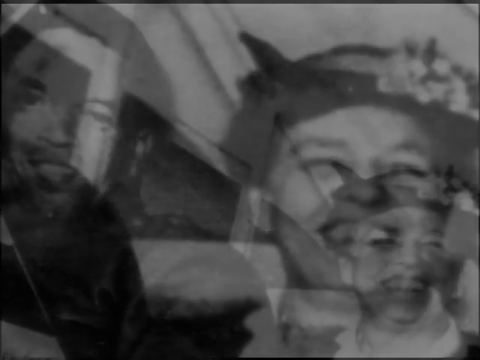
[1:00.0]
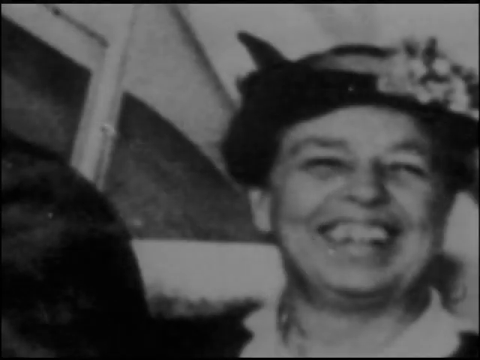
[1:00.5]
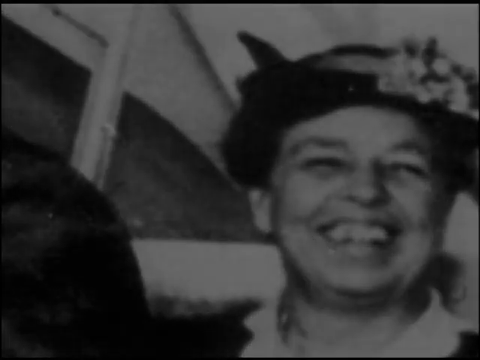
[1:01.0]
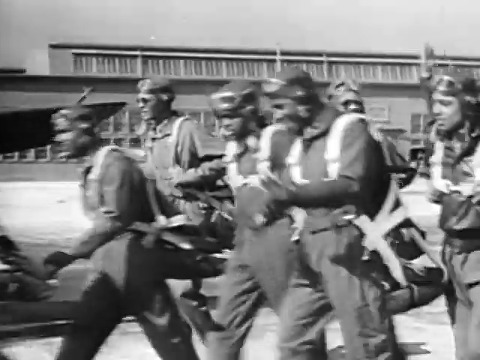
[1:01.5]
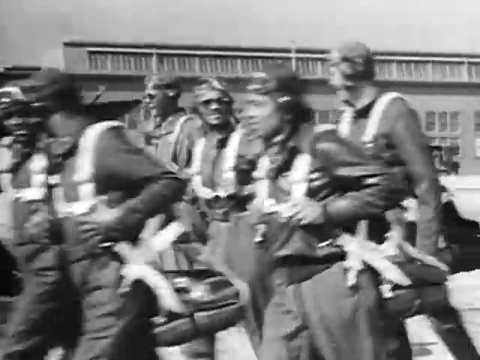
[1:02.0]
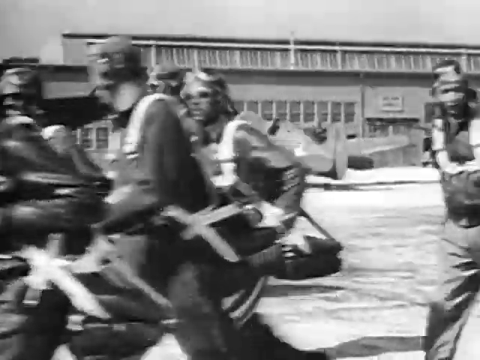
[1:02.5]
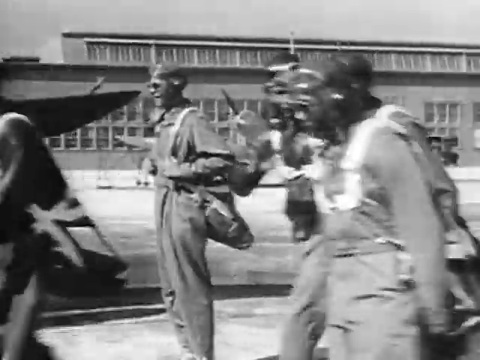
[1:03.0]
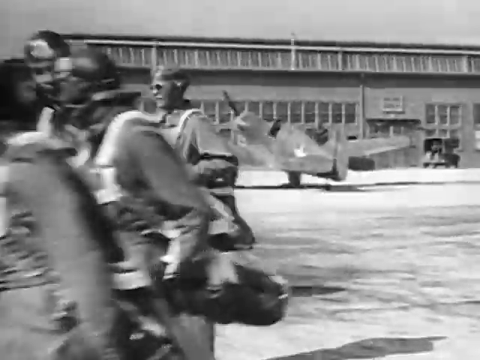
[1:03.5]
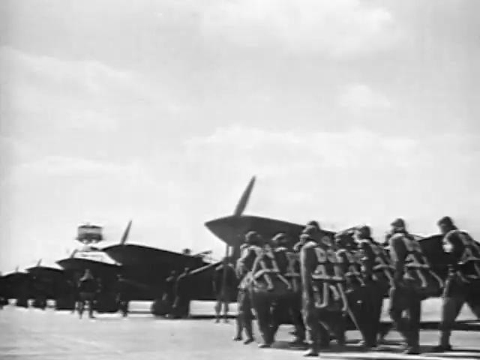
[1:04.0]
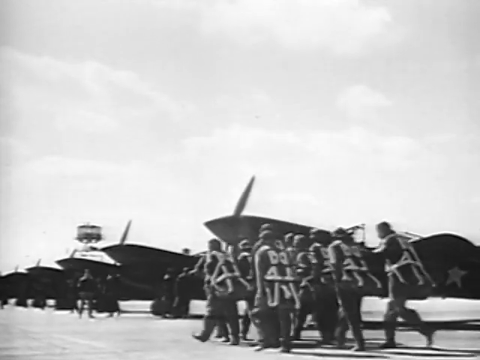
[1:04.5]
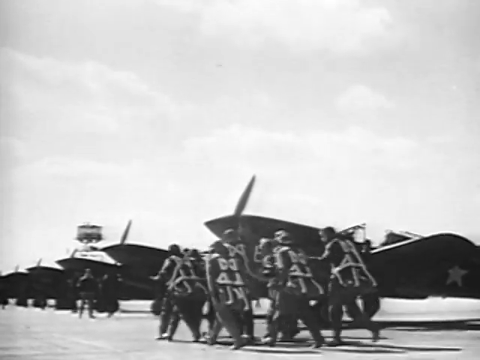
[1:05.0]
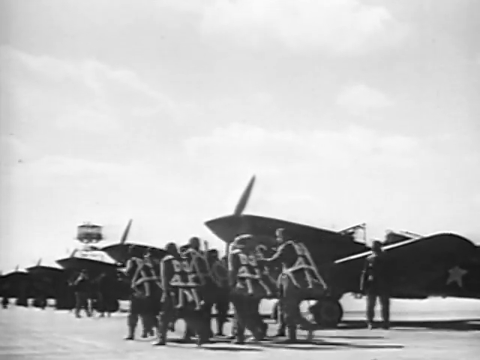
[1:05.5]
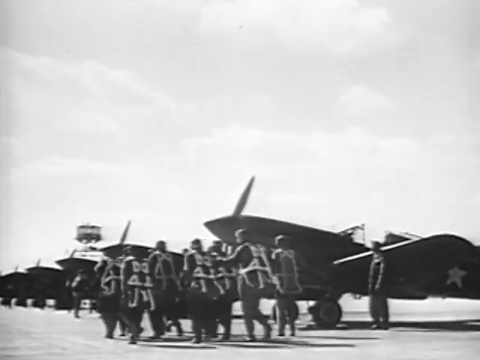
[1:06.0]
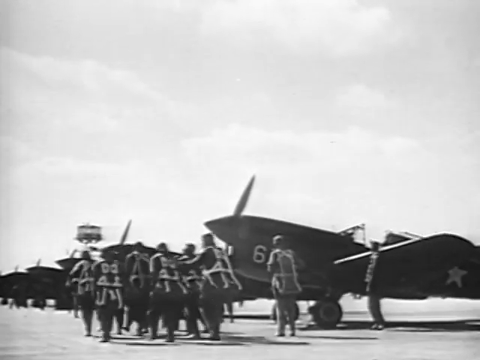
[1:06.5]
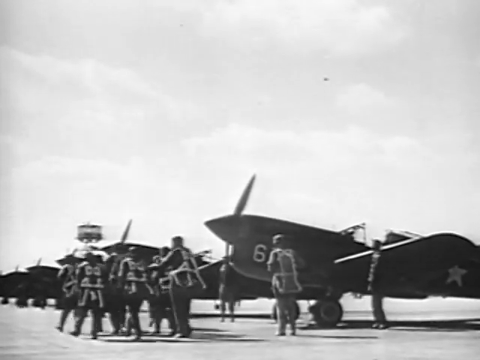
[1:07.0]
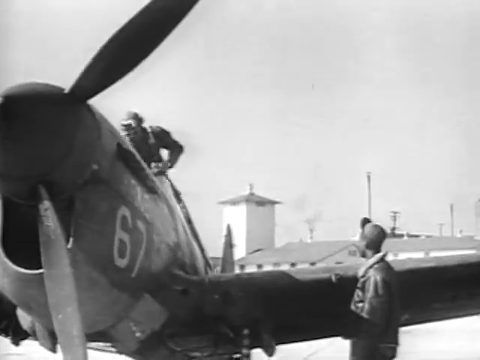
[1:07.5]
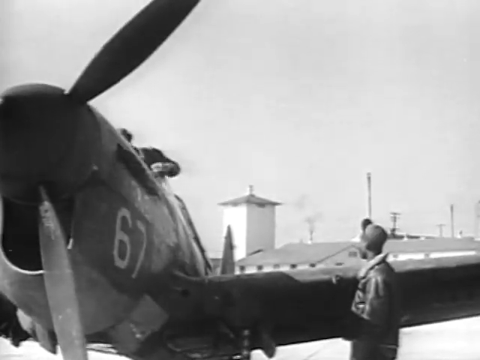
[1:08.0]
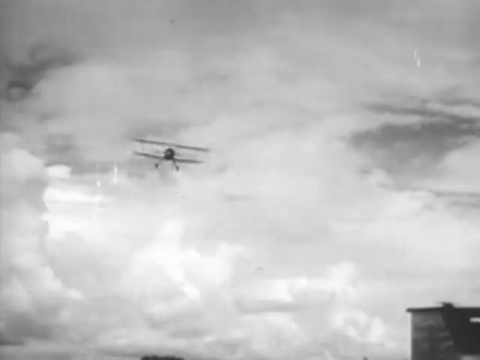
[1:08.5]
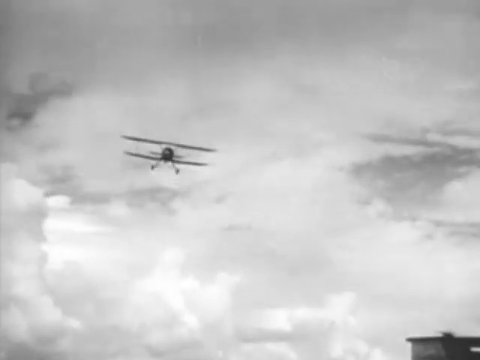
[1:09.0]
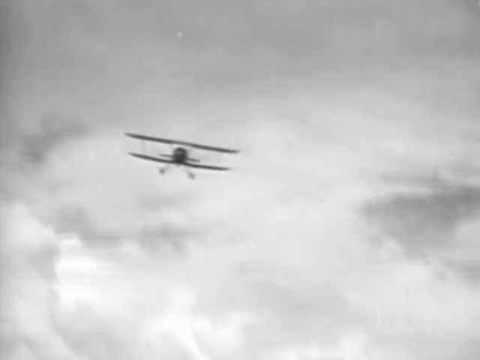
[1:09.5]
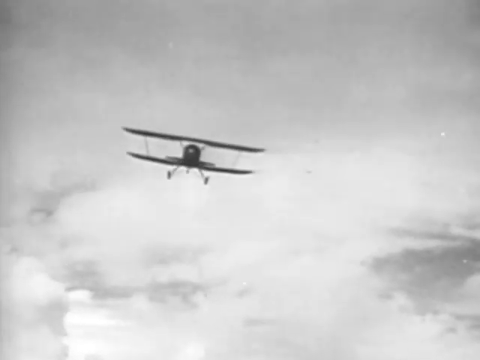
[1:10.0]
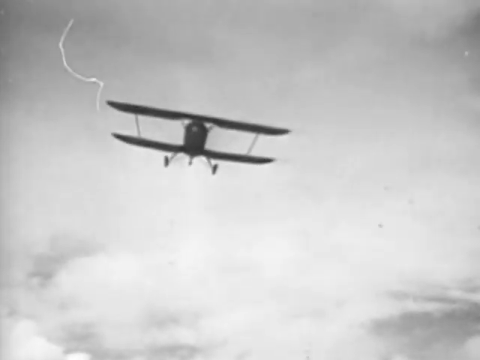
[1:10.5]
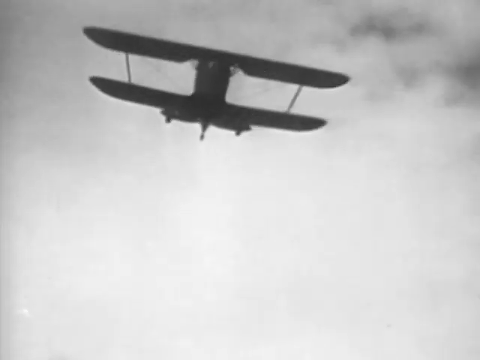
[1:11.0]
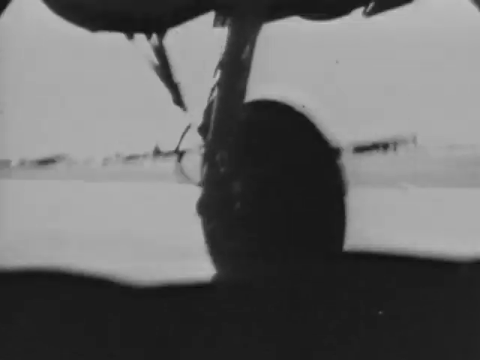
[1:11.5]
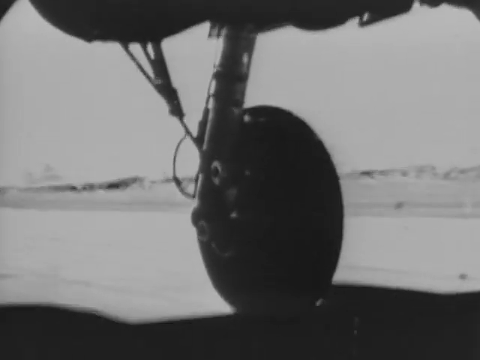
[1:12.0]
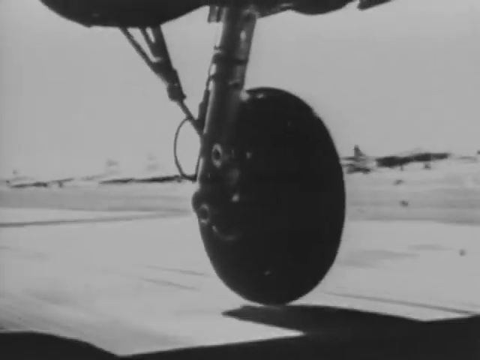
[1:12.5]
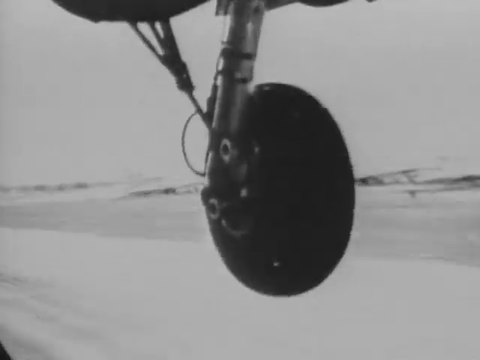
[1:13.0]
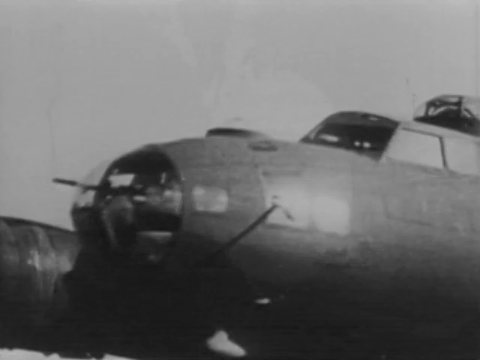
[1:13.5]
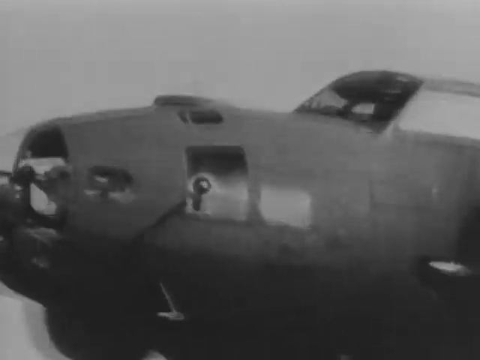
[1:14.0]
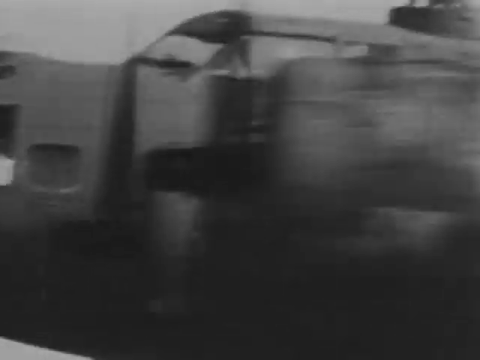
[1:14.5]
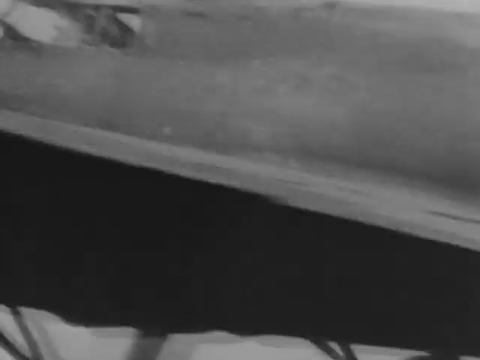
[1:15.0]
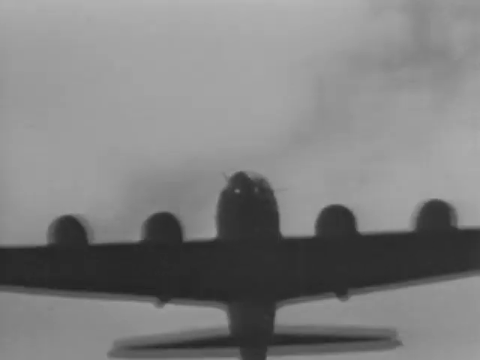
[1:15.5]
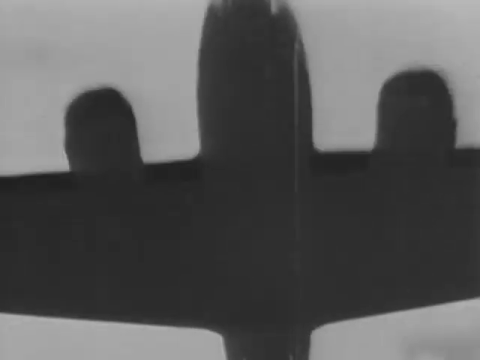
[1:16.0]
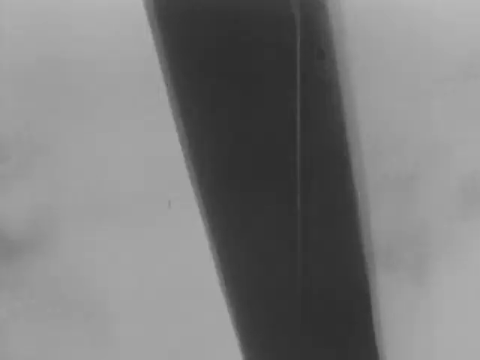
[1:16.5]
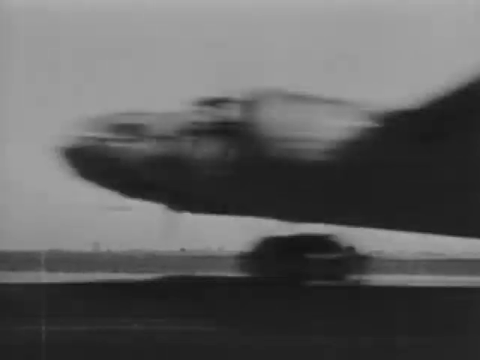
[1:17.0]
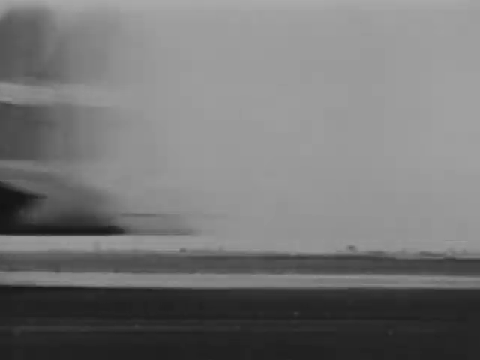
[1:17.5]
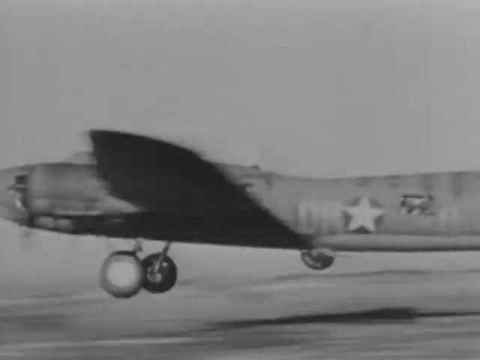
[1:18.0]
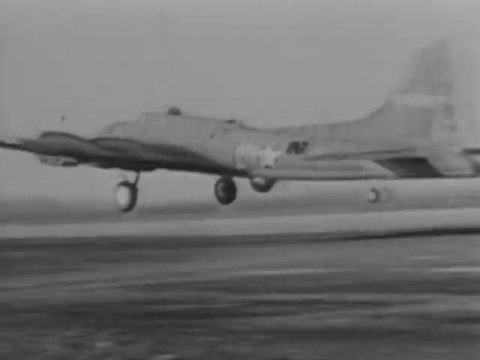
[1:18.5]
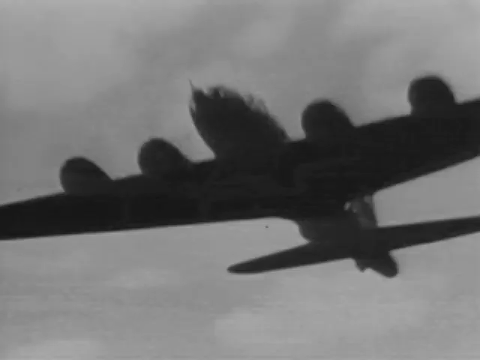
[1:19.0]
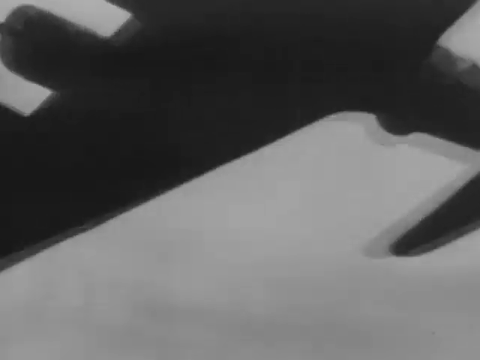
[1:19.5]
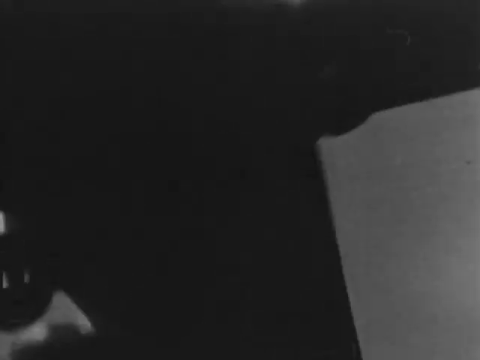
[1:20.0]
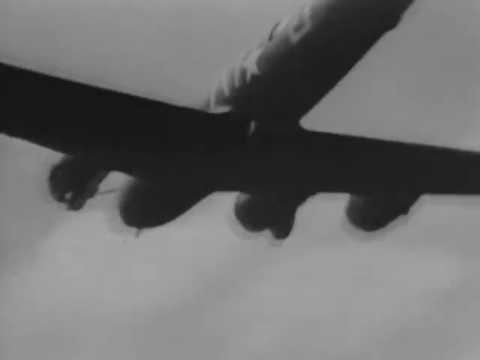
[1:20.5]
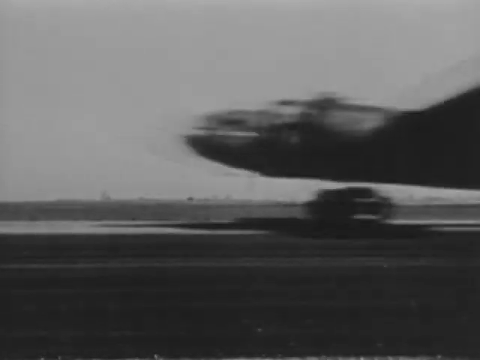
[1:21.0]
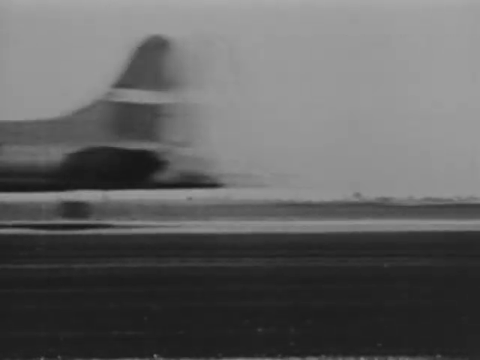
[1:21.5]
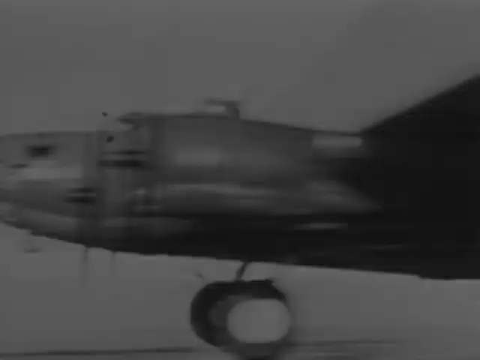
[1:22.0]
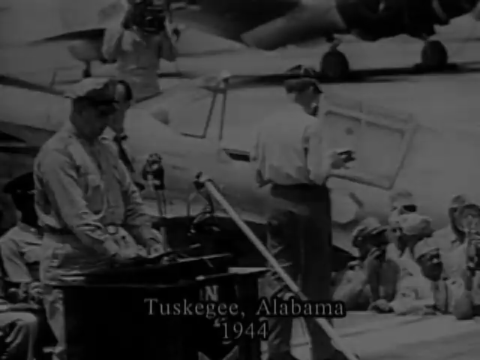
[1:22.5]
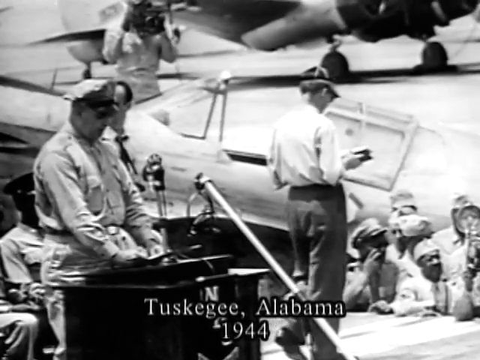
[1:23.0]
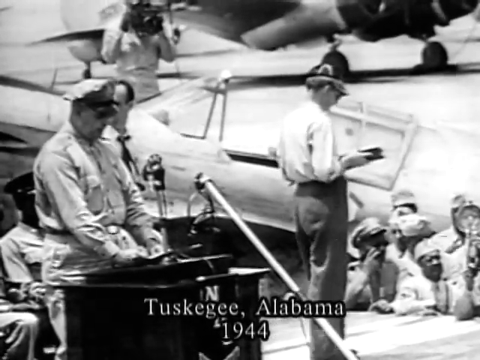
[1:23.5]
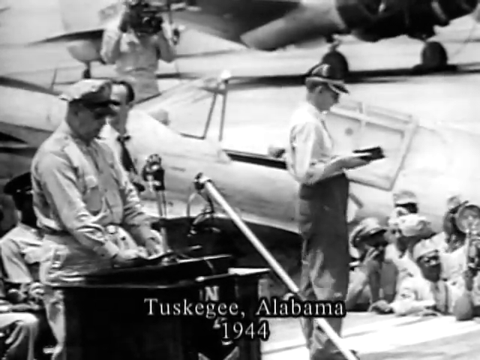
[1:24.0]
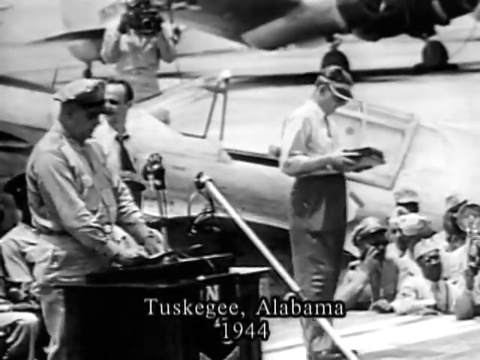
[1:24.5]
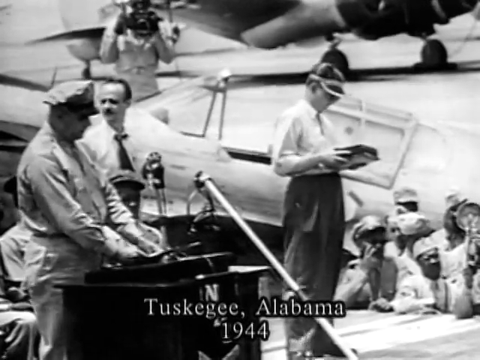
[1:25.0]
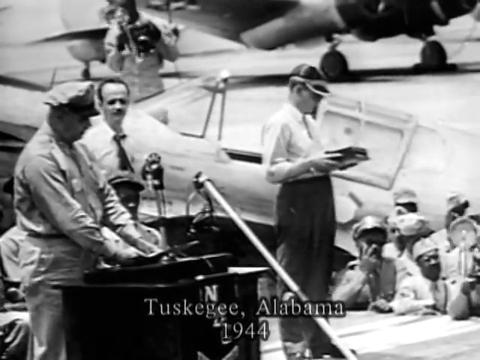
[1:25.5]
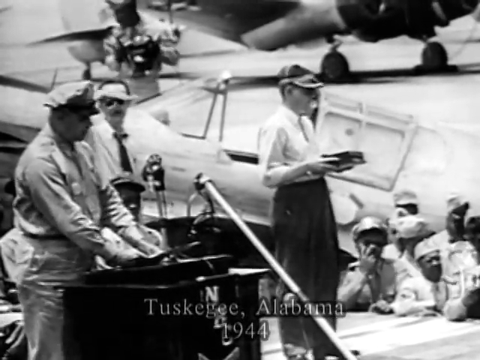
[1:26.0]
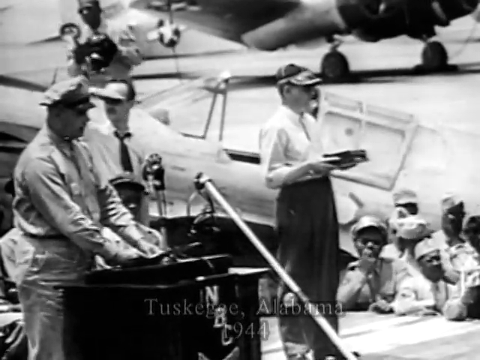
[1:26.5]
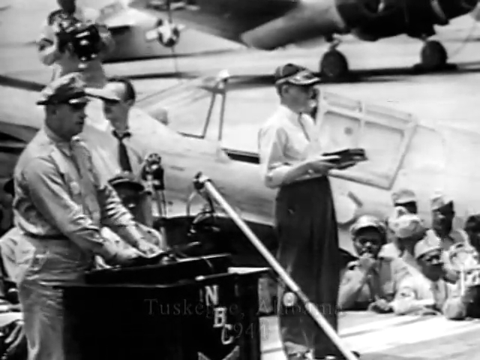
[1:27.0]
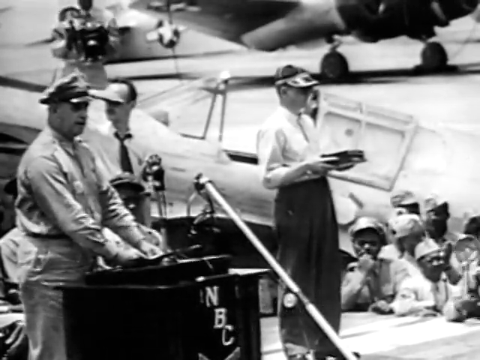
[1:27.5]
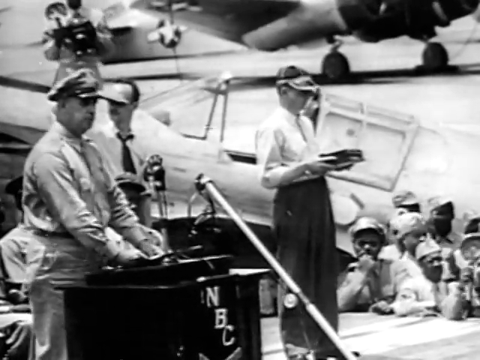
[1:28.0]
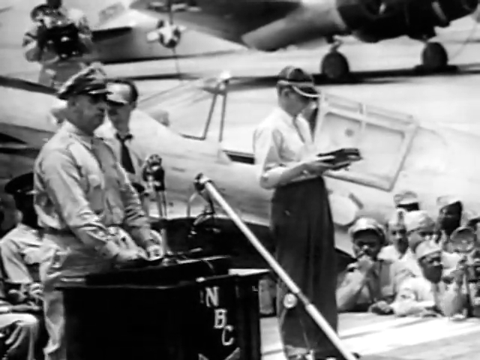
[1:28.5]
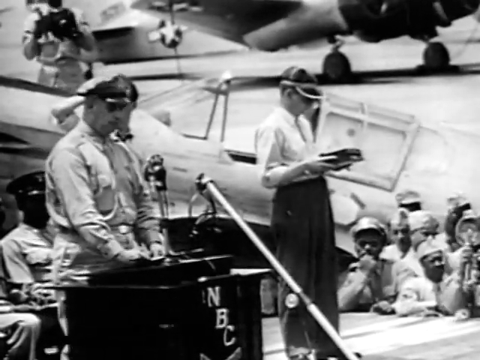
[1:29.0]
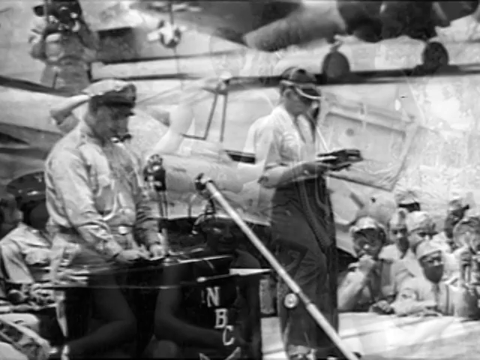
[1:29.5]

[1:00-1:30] A close-up black-and-white photo shows a smiling soldier inside either barracks or a tent, among photos of smiling soldiers. Footage shows soldiers running or moving, with a building to the right under skies that look gray or sunny. Air Force soldiers appear with airplanes; these are the Tuskegee Airmen, getting ready to fly planes. A double-winged plane, known as a Stearman, goes by under cloudy skies. A camera view from an airplane shows it taking off, with the wheel visible. A stationary camera watches a plane go overhead, and other airplanes fly by, apparently including some B-19s and B-52s. The text "Tuskegee, Alabama, 1944" appears.